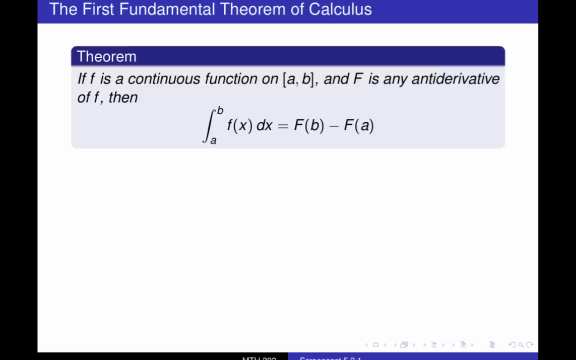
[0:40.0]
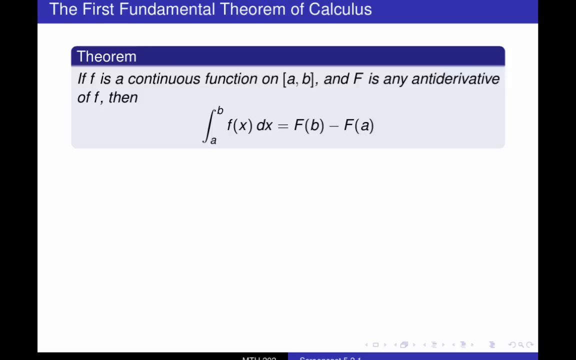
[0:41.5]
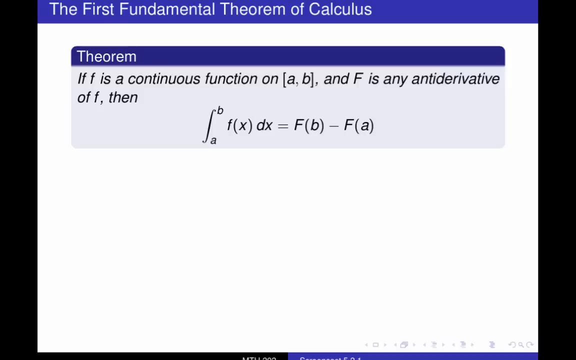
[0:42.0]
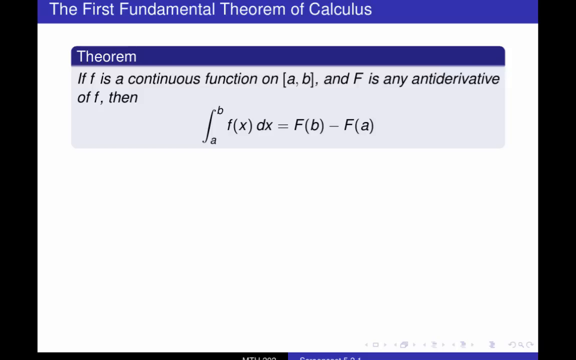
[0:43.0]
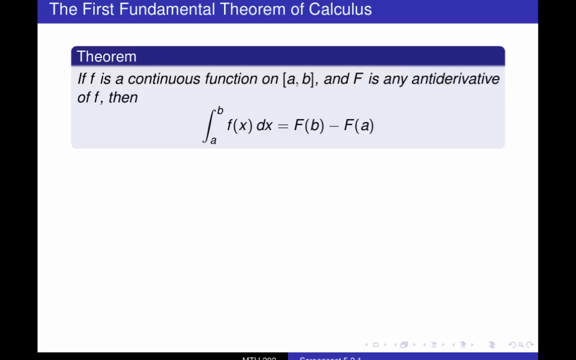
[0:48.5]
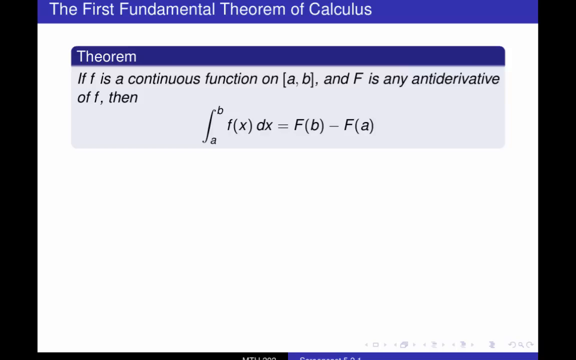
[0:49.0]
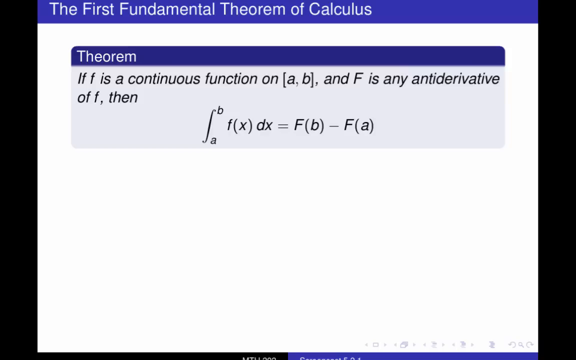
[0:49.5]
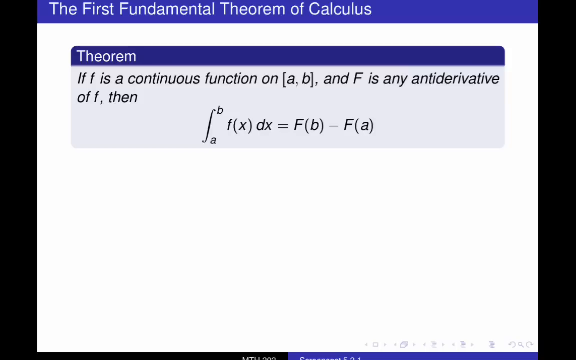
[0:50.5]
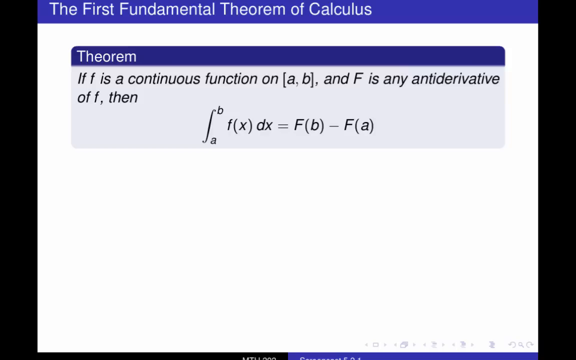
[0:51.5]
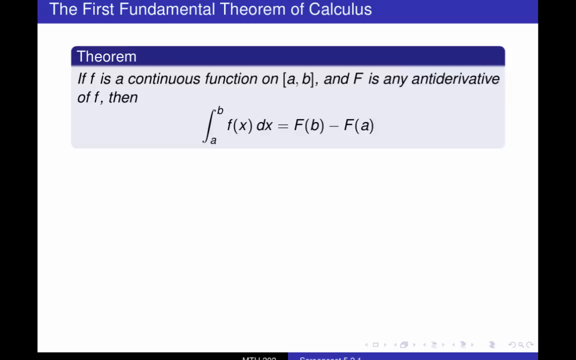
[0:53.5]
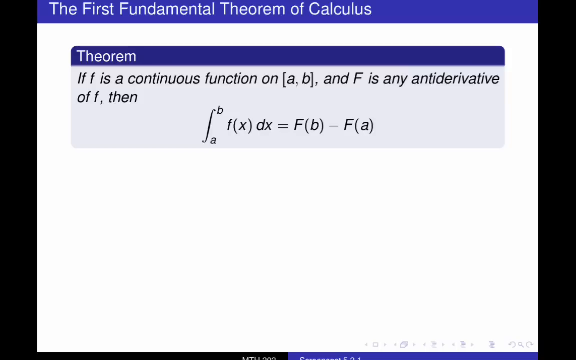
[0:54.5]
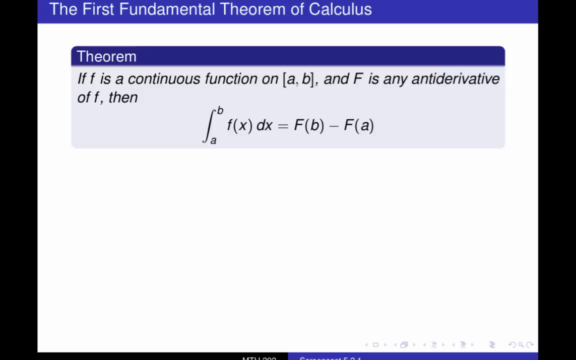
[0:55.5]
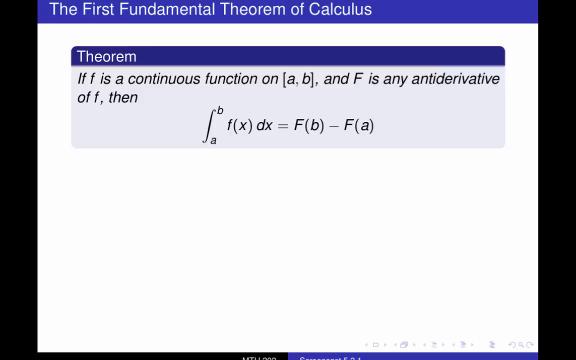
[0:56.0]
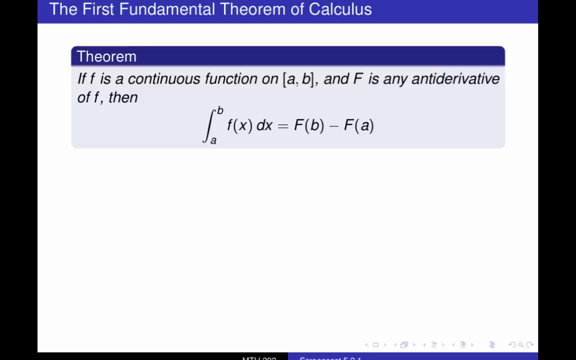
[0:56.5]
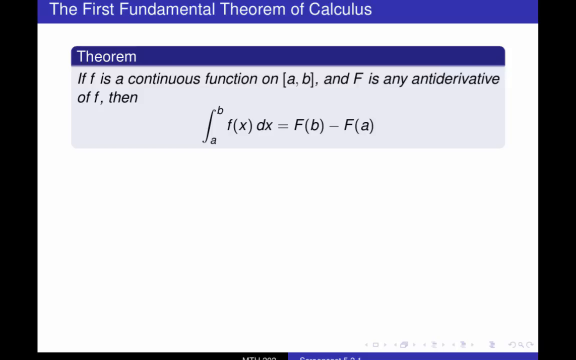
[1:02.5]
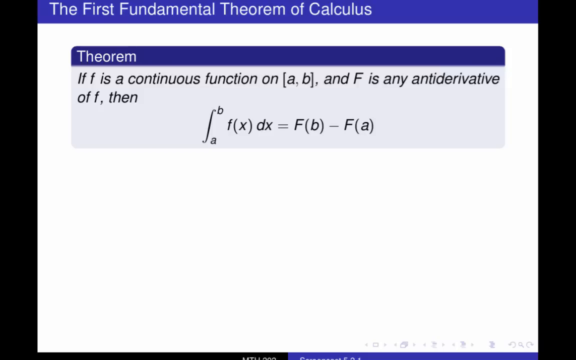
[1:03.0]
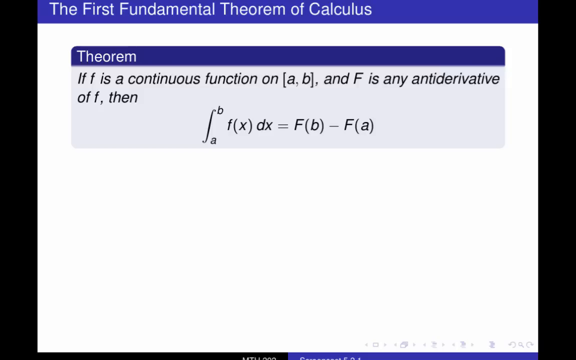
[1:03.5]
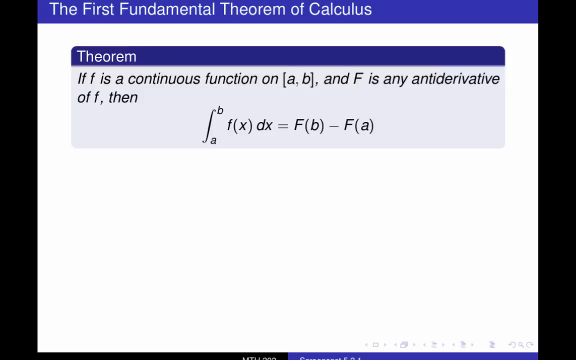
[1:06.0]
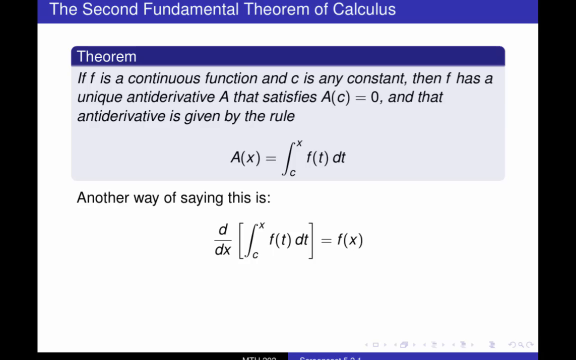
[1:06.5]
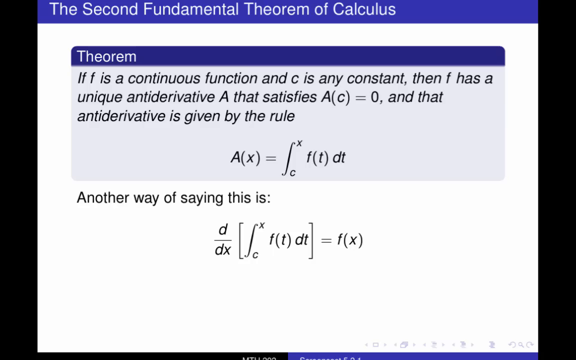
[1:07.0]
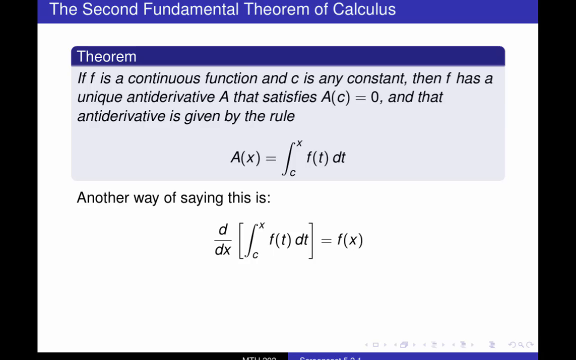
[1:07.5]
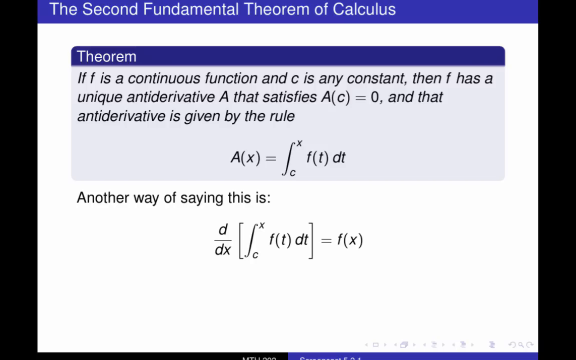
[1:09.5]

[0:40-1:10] A College Calculus 2 slideshow opens with an image, presumably of the college campus in an aerial view. The first slide says "Math 202 Calculus 2", and the subtext says "Screencast 5.2.1 Quick Recap The Second Fundamental Theorem of Calculus". "Grand Valley State University" is written along the bottom. After a few seconds, the screen switches to a slide titled "The First Fundamental Theorem of Calculus", with a small box saying "Theorem, if f is a continuous function on a, b, and f is any antiderivative of f, then", followed by an example. It stays on this slide for around 30 seconds, until it switches to a slide titled "the second fundamental theorem of calculus" reading "if F is a continuous function and C is any constant then F has a unique antiderivative a that satisfies a(C) = 0 and that antiderivative is given by the rule", which is then simplified into an equation. The slides then switch again to one saying "if f is a continuous function on a, b, and f is any antiderivative of f, then", with another example.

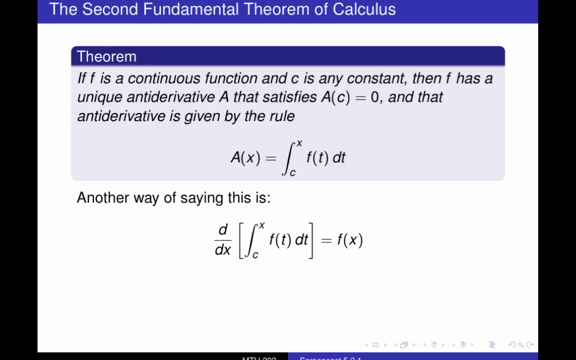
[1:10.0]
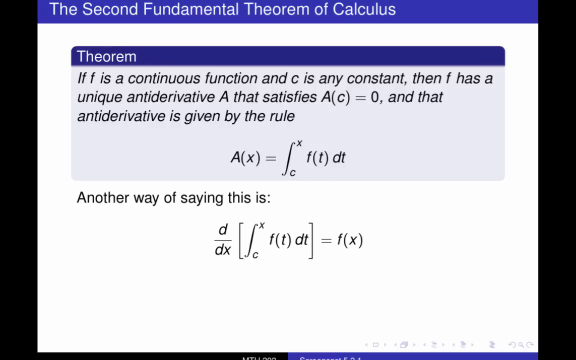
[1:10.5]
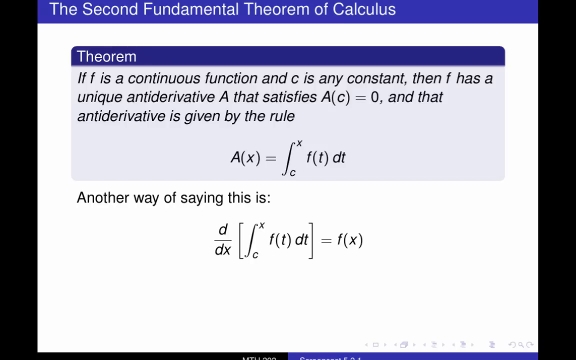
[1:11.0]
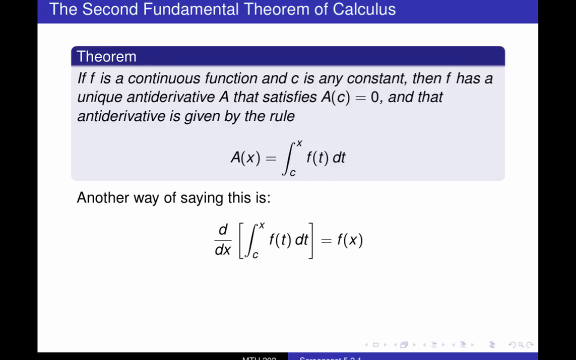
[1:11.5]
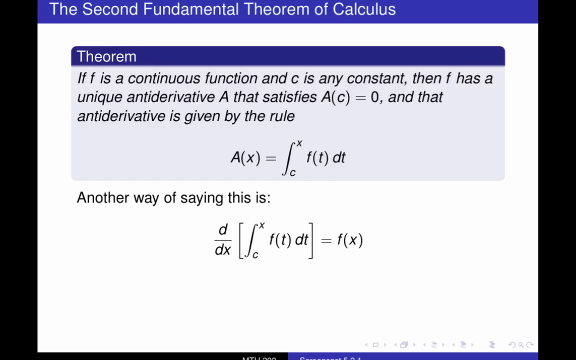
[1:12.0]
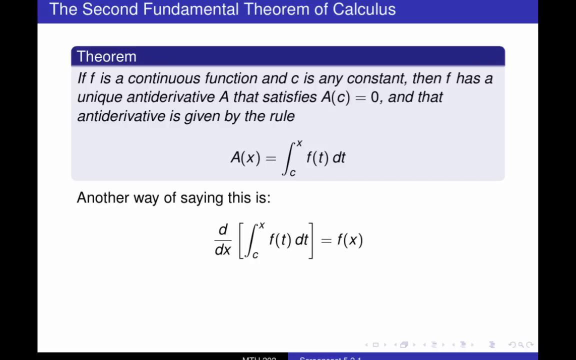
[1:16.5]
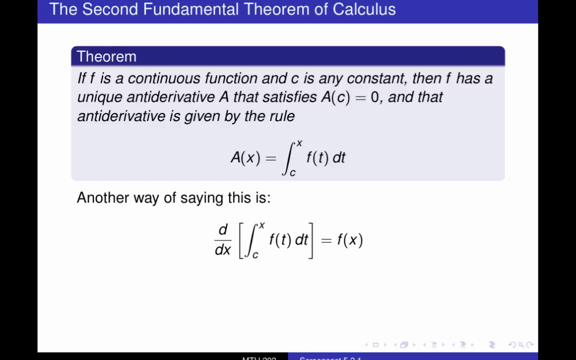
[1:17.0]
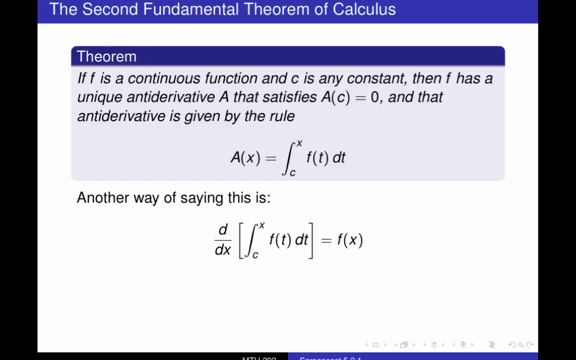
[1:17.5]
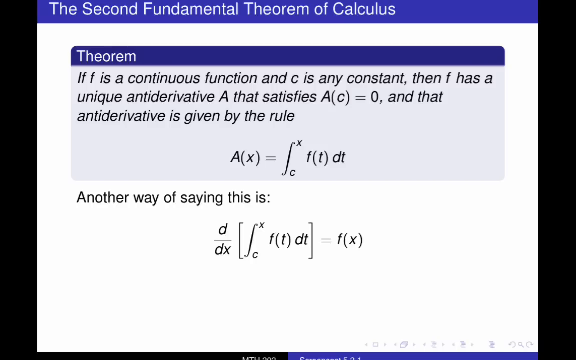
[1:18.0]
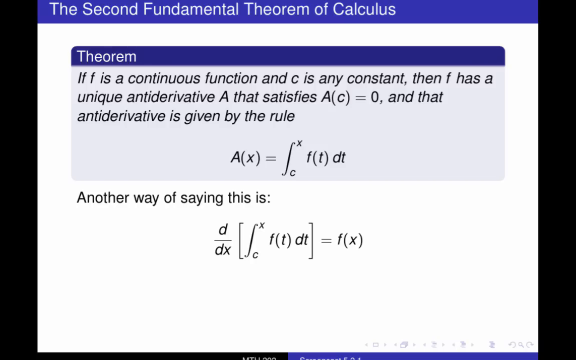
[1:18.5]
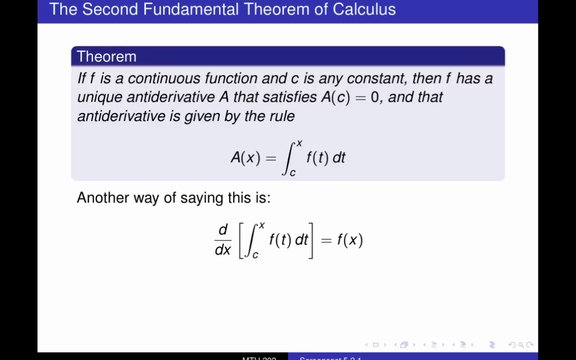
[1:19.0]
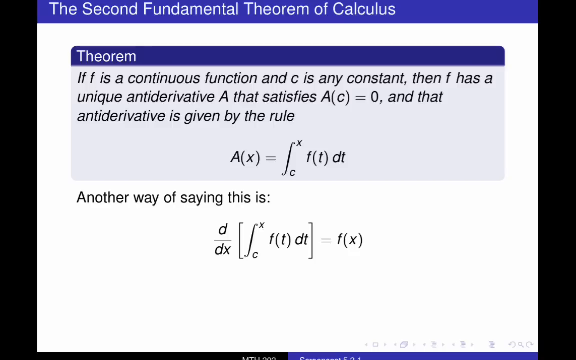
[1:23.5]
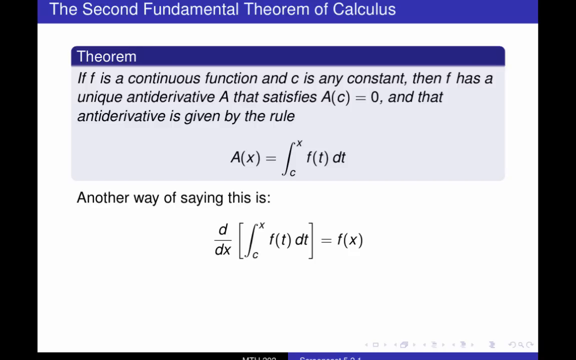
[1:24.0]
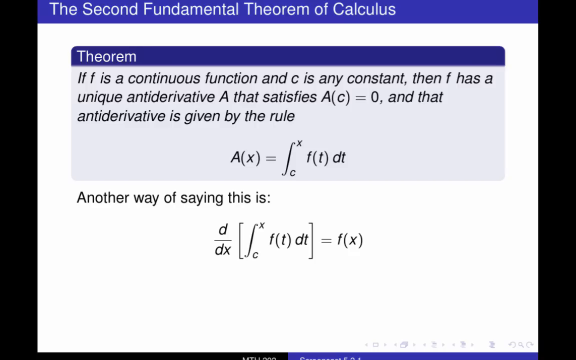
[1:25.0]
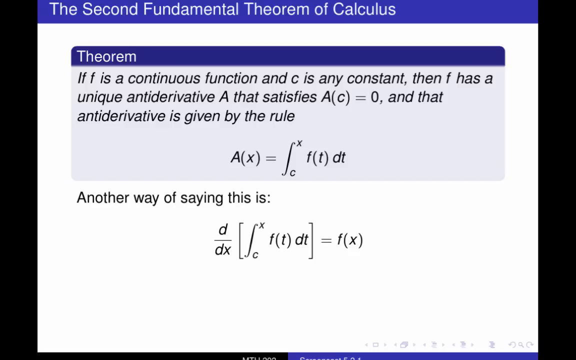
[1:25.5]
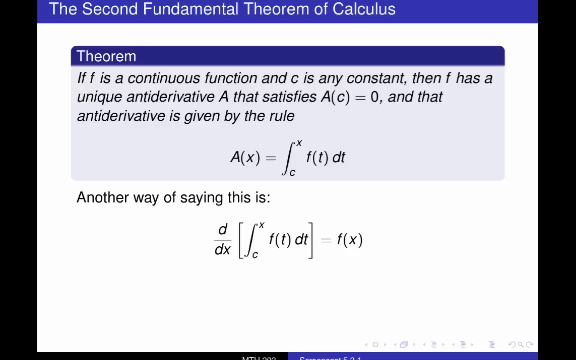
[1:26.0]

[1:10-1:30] Part of a slideshow on the second fundamental theorem of calculus appears, with text on a basic white background. The text says "if f is a continuous function and c is any constant, then f has a unique antiderivative a that satisfies a(c) = 0, and that antiderivative is given by the rule", followed by the equation and then a simpler way of stating the same equation. The slide stays on screen the whole time. Part of a taskbar is visible throughout, partially cut off and illegible. All titles on the slide are highlighted with a blue bar, subtitles with a dark blue bar, and subtext is set in an off-white box that separates it from the rest of the text on screen.